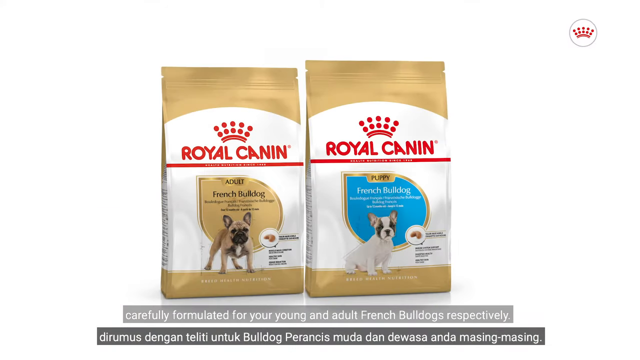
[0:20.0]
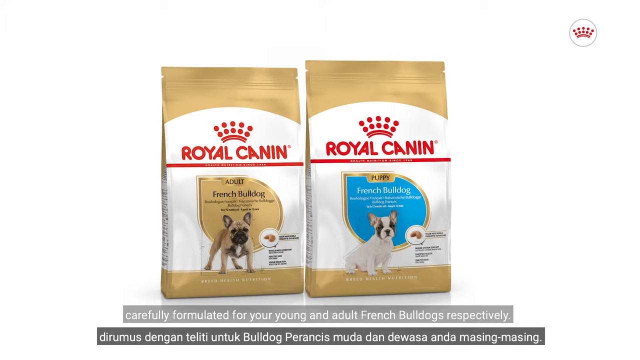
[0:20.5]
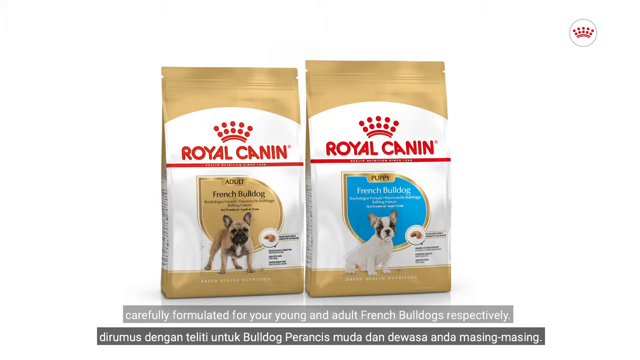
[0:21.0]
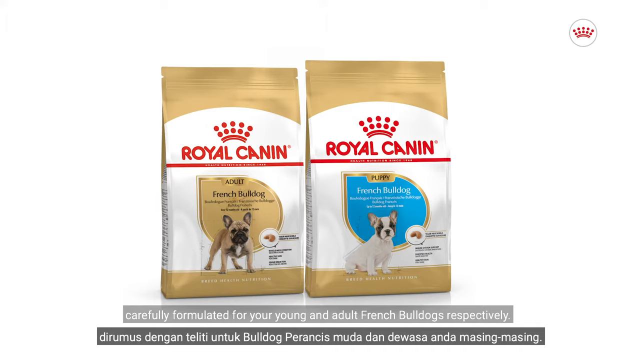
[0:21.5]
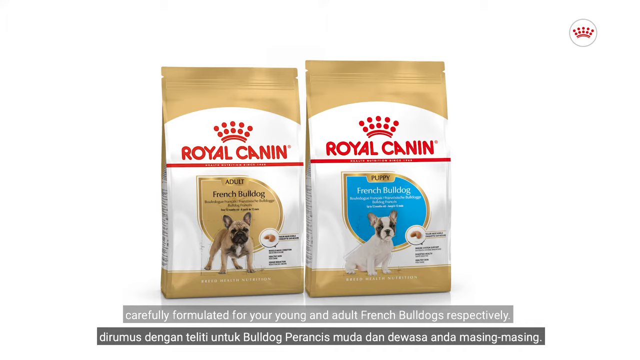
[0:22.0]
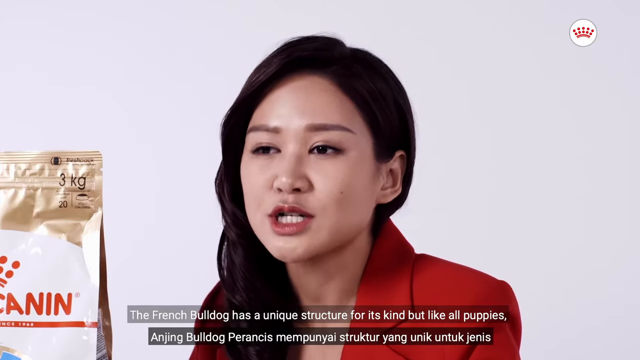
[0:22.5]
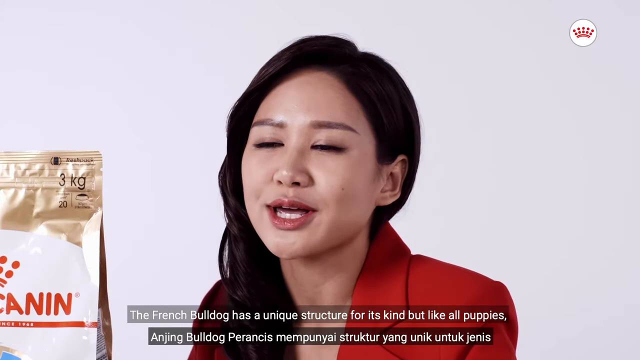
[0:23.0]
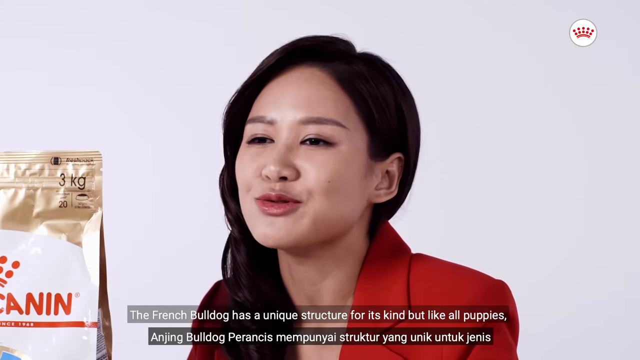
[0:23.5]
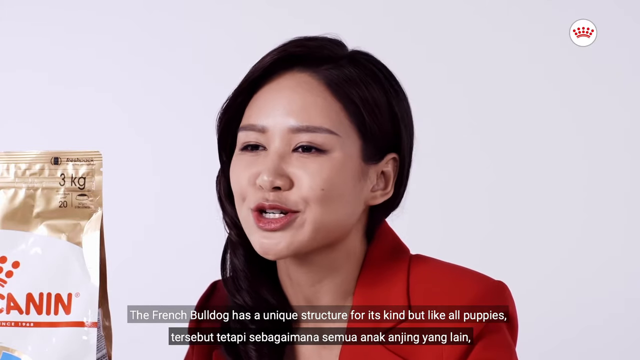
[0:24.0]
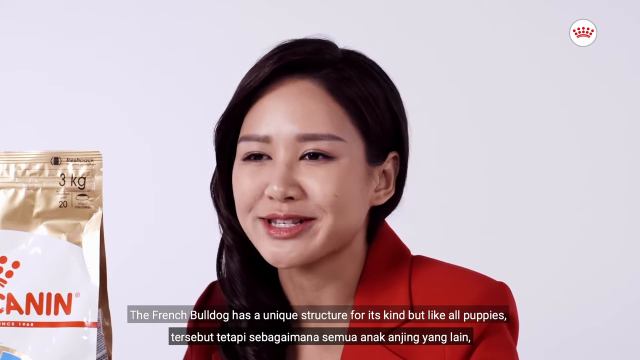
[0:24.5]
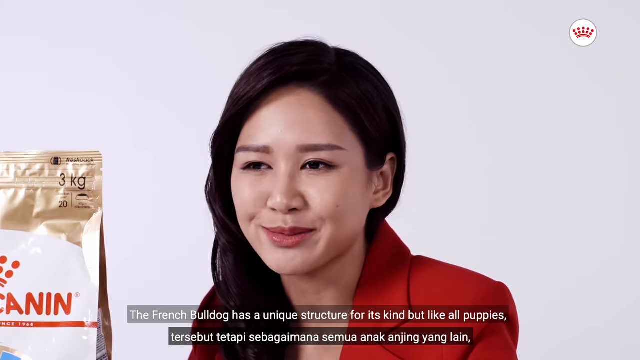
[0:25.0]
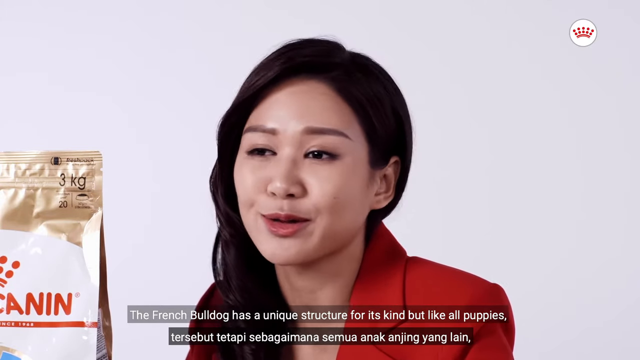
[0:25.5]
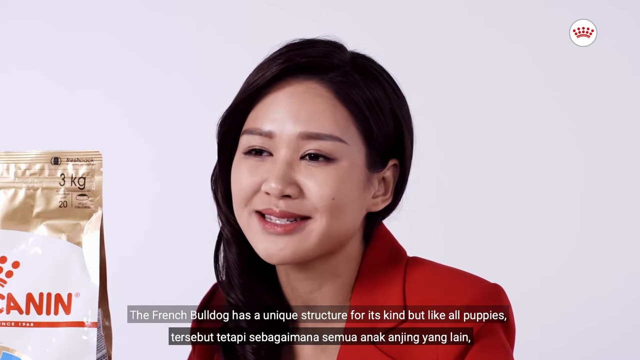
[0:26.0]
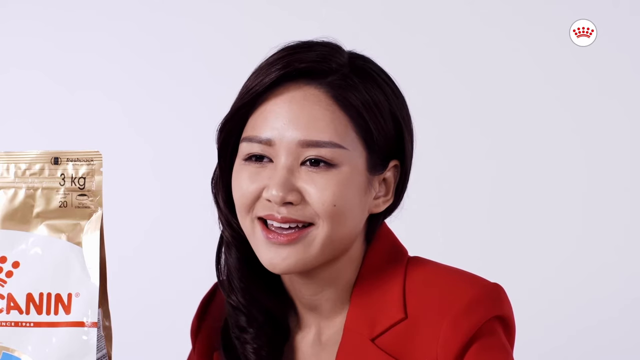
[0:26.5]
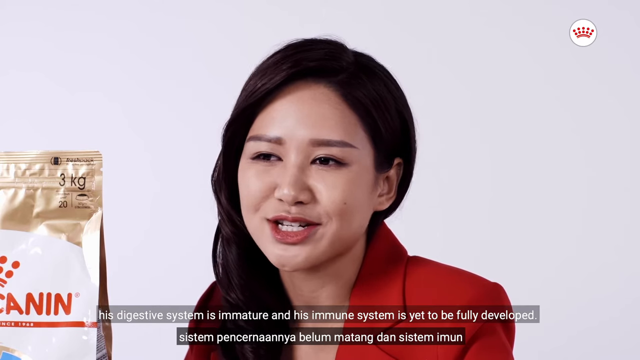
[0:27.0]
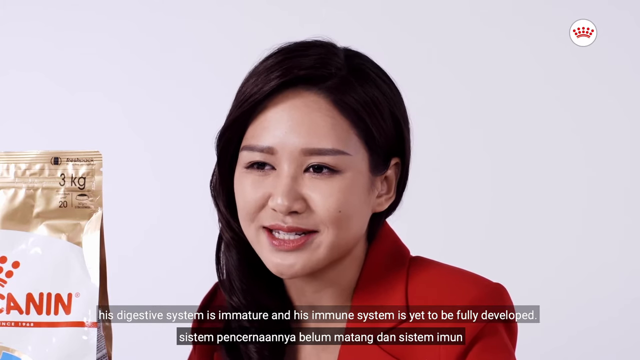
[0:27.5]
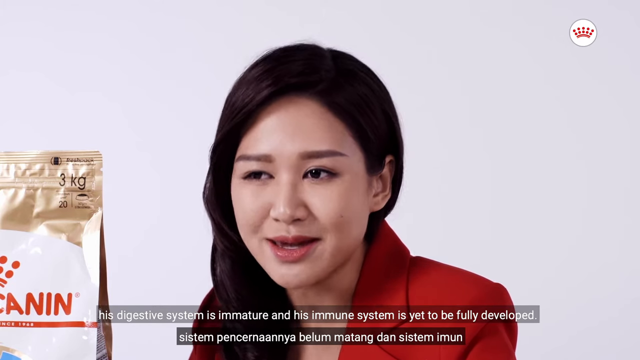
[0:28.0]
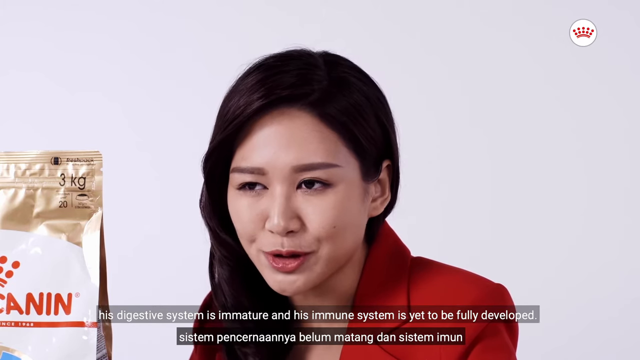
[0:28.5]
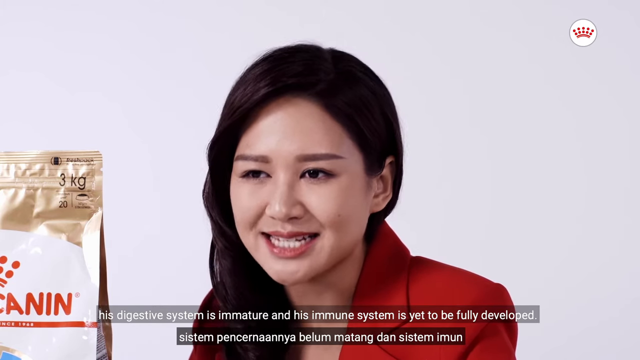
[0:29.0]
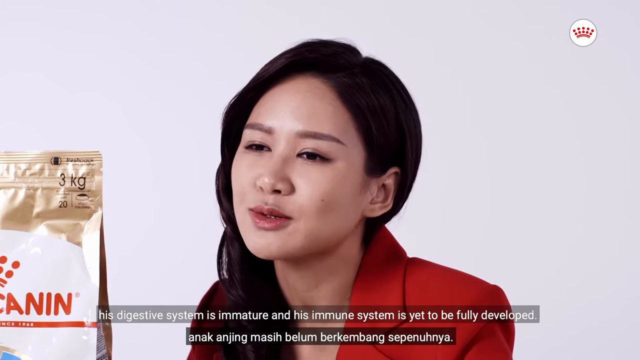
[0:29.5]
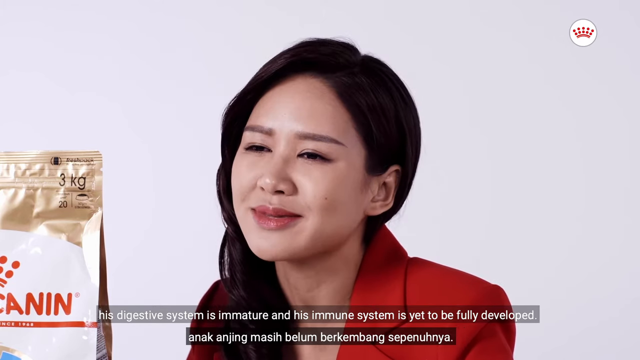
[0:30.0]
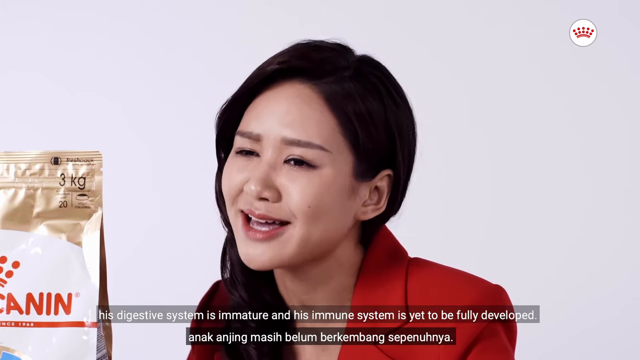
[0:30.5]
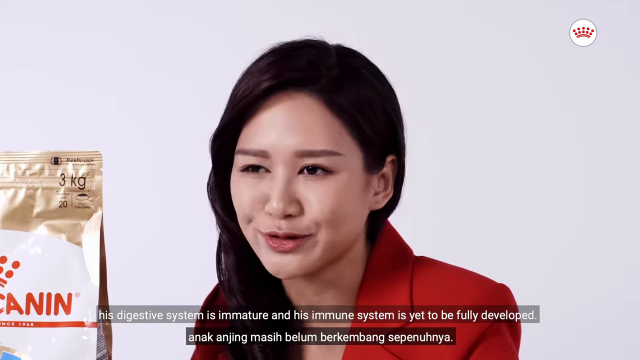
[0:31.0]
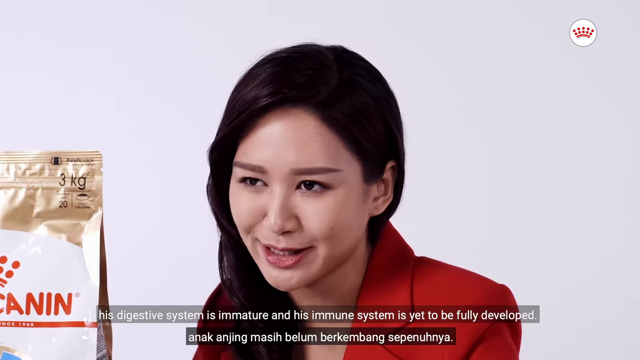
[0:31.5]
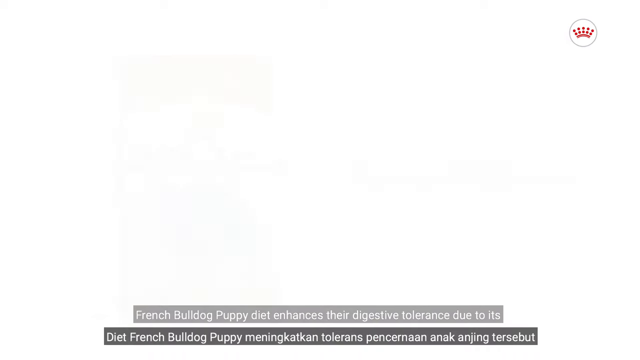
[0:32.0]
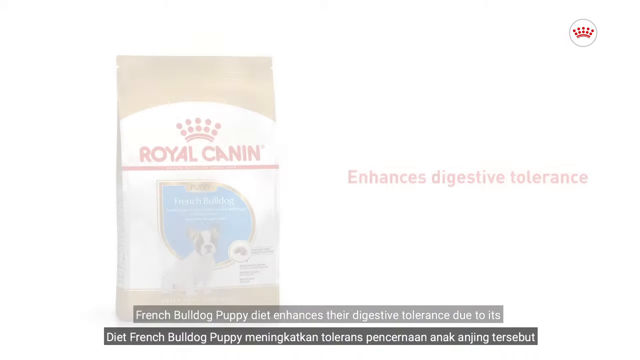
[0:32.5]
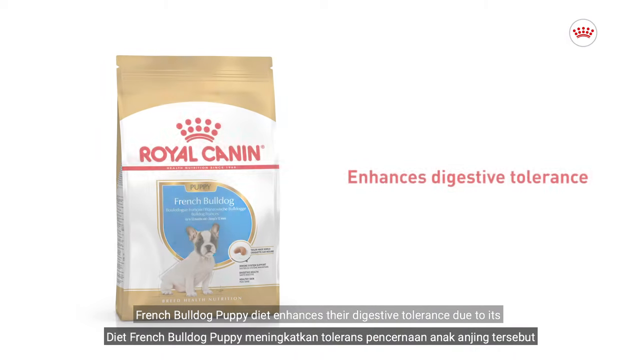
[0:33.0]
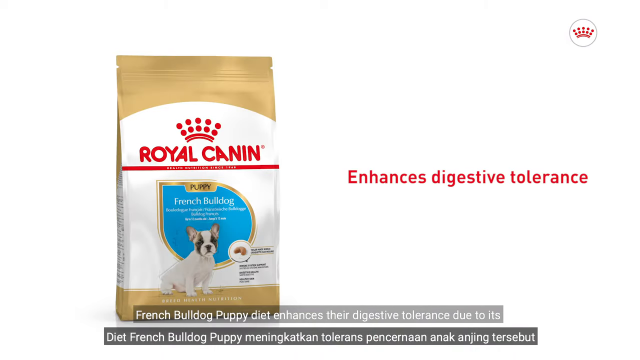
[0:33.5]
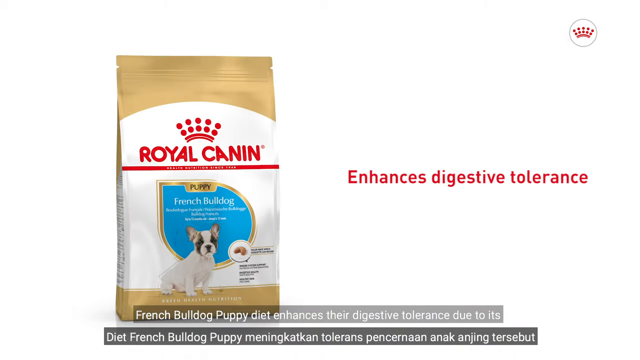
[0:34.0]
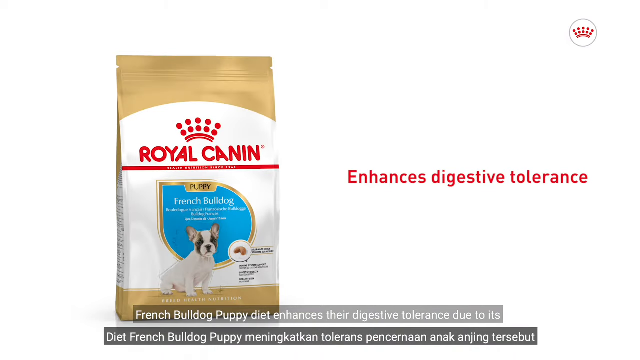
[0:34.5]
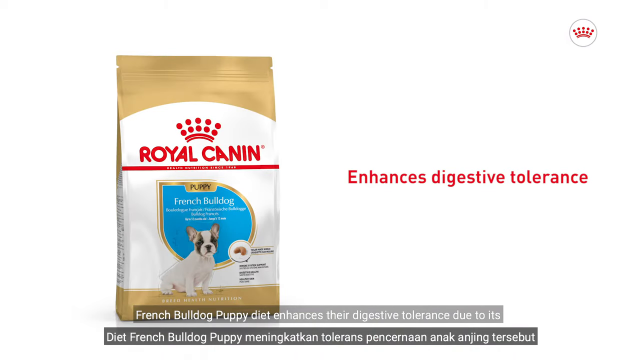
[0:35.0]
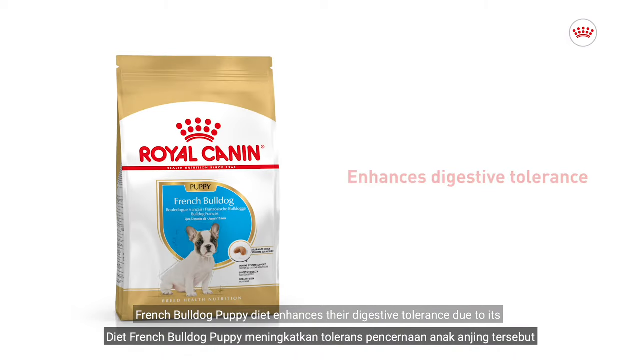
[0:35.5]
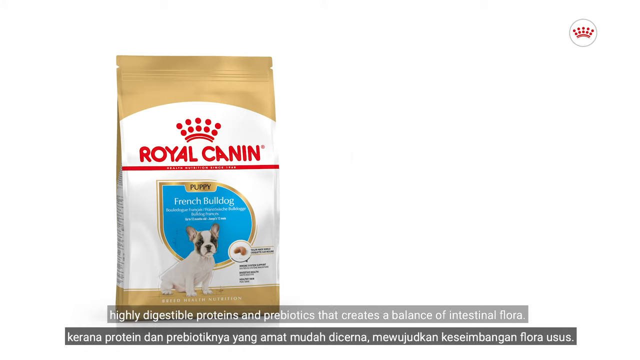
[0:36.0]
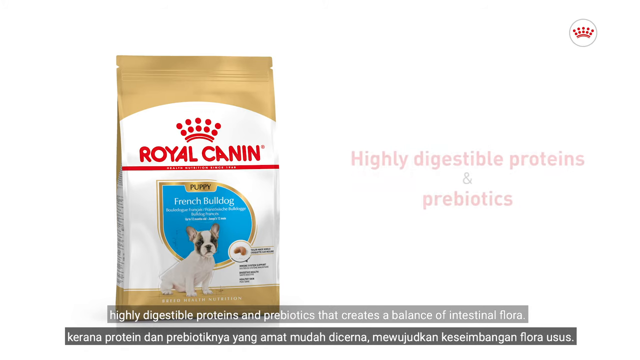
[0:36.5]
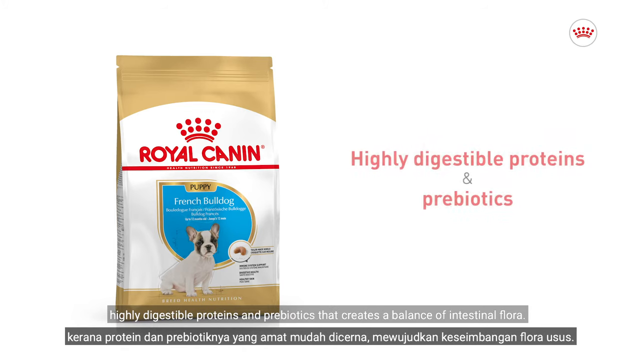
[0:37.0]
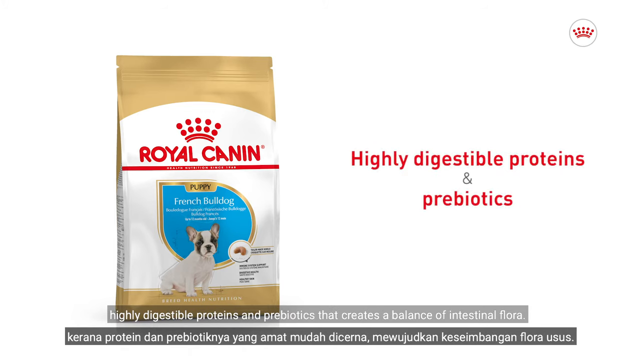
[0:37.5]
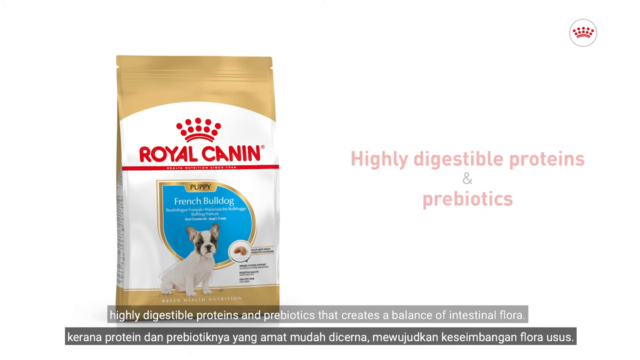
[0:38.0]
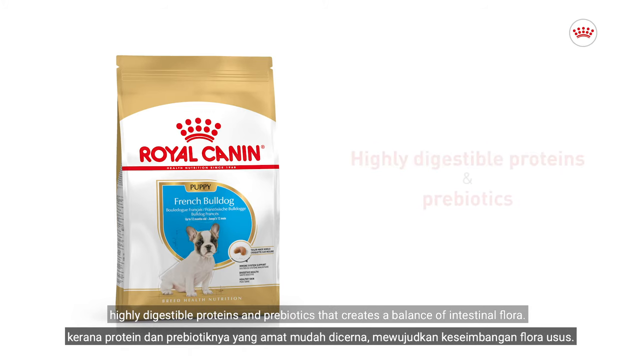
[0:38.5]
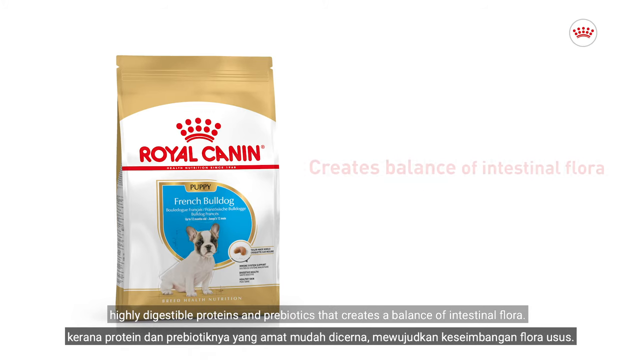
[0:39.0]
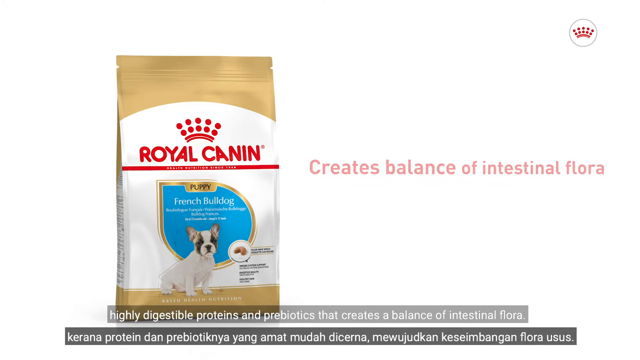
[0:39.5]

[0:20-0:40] The video appears to be about Royal Canin dog food. The two bags of Royal Canin dog food are shown, then the scene switches to an Asian woman in a red suit coat sitting at a table and speaking toward the camera, her words apparently transcribed in English in a subtitle-style format. She keeps talking and smiling at the camera. The scene then cuts to a bag of Royal Canin dog food with red text to its right that says "enhances digestive tolerance". That text disappears and the statement "highly digestible proteins and prebiotics" appears, then disappears as well.